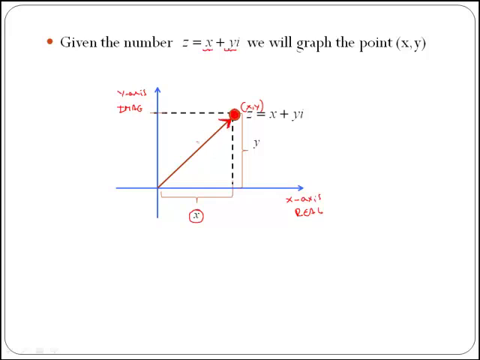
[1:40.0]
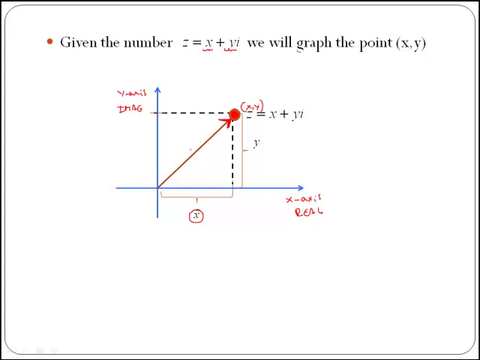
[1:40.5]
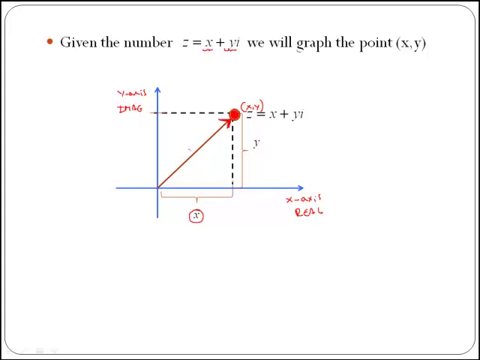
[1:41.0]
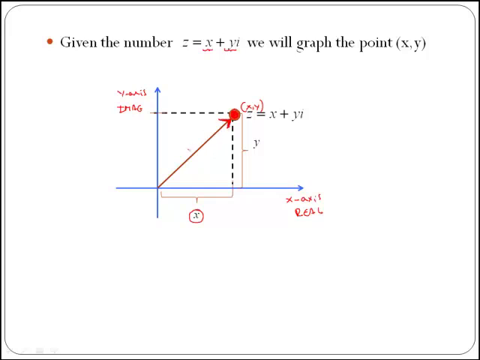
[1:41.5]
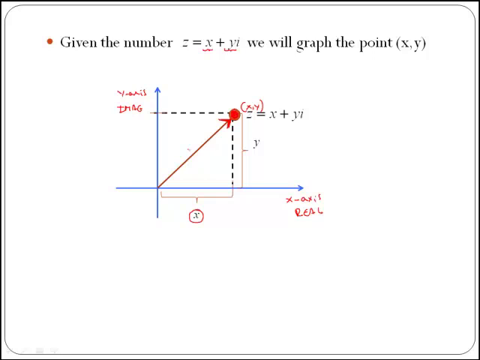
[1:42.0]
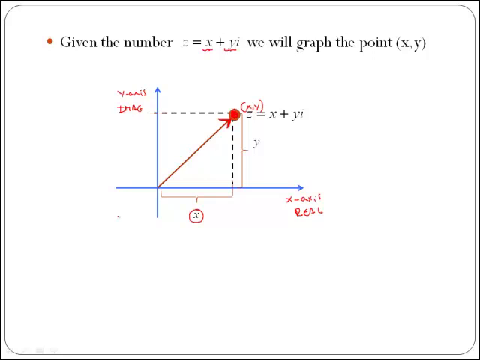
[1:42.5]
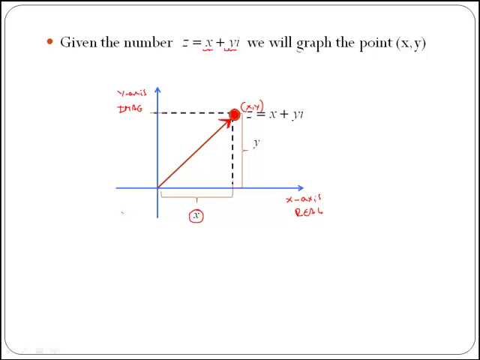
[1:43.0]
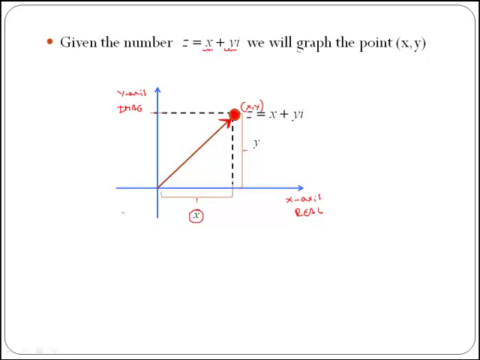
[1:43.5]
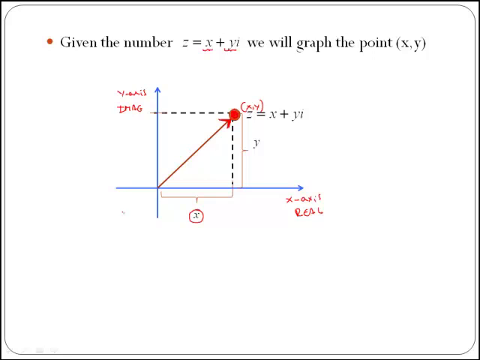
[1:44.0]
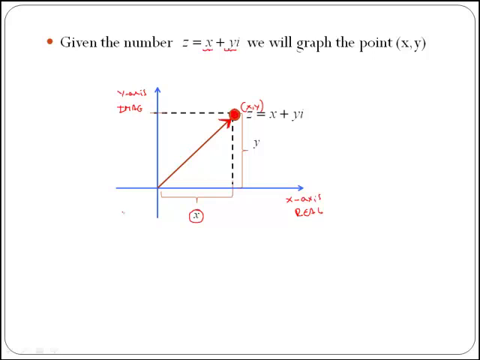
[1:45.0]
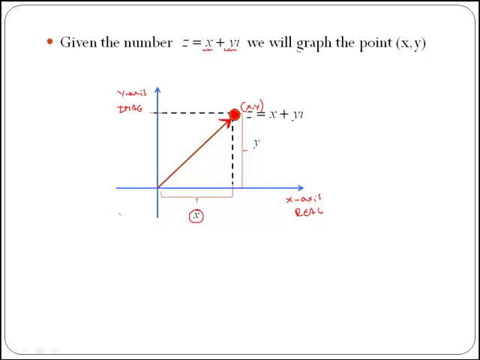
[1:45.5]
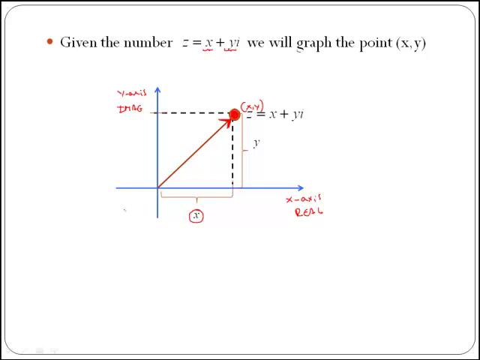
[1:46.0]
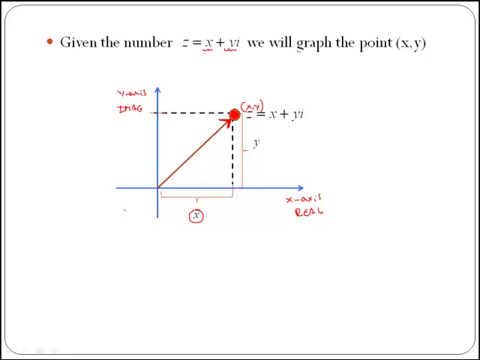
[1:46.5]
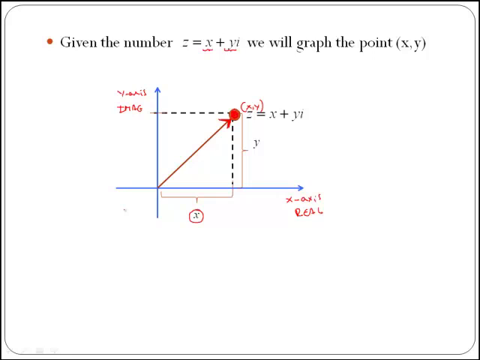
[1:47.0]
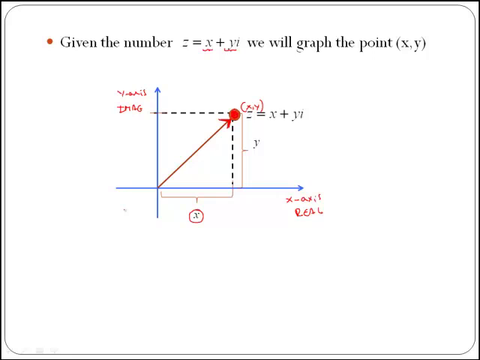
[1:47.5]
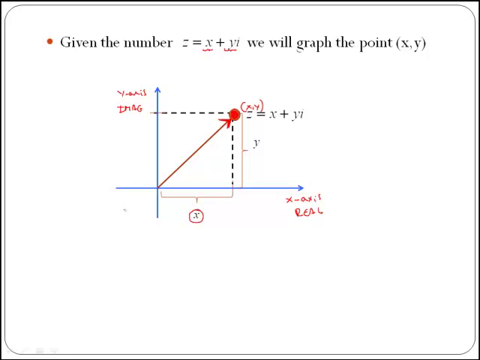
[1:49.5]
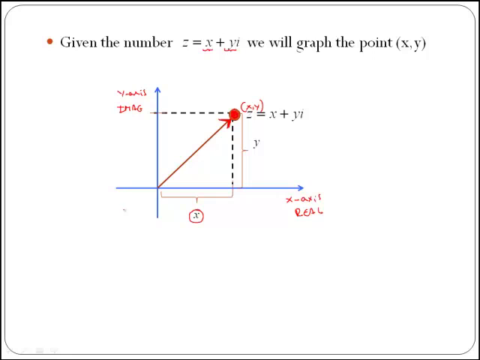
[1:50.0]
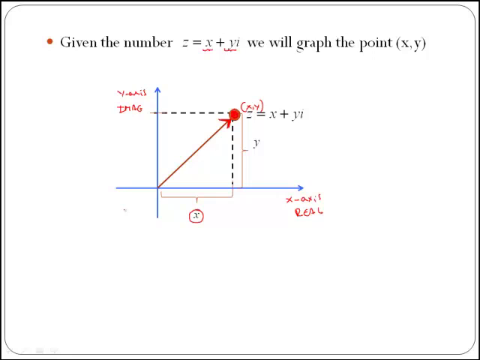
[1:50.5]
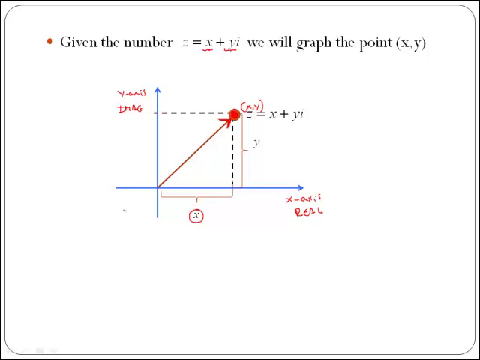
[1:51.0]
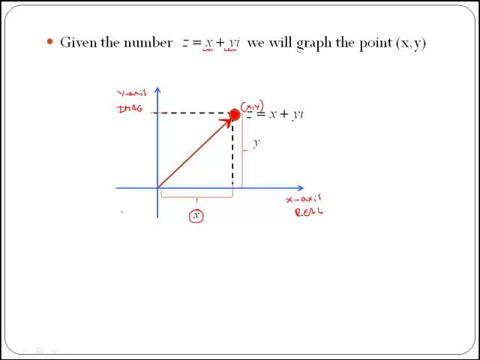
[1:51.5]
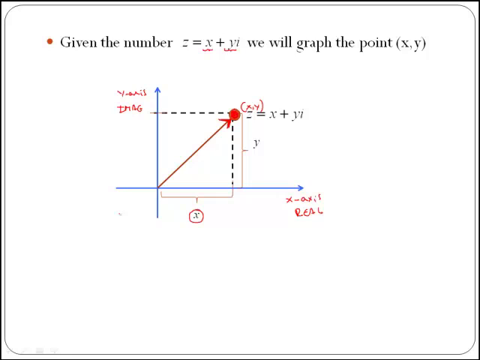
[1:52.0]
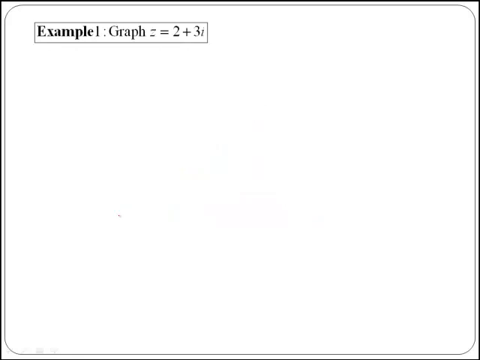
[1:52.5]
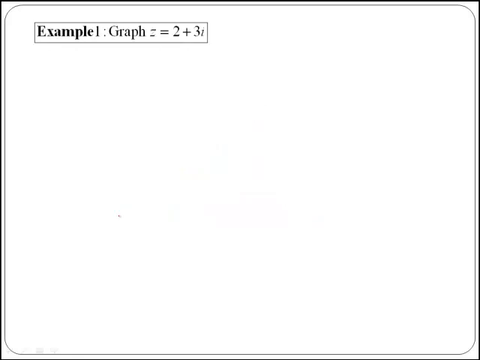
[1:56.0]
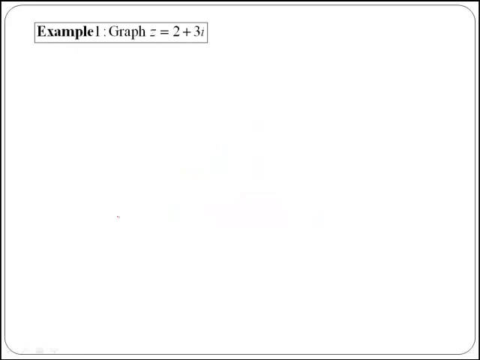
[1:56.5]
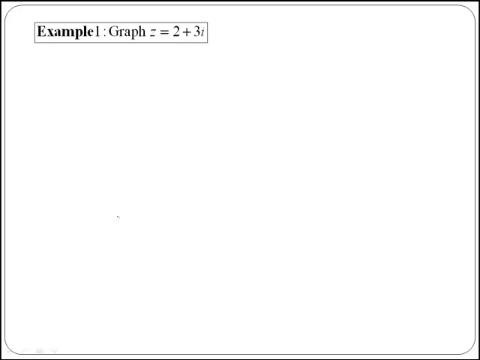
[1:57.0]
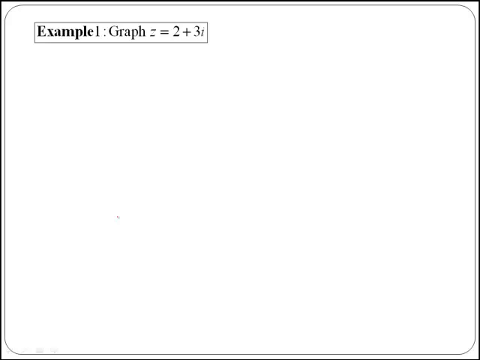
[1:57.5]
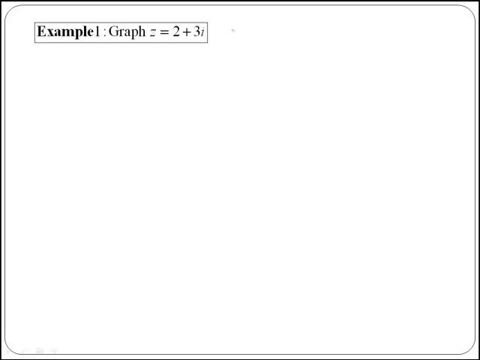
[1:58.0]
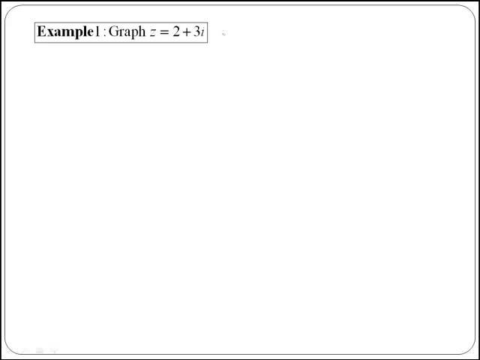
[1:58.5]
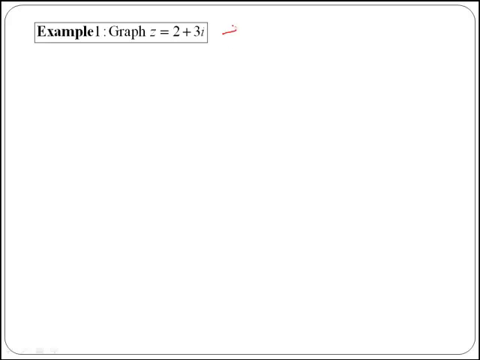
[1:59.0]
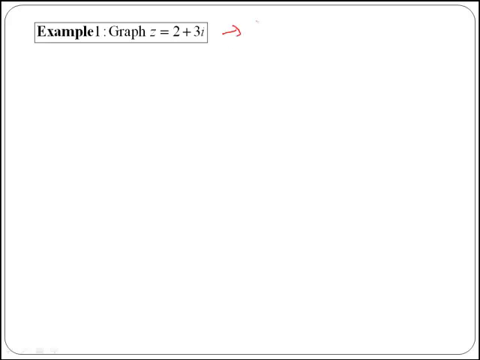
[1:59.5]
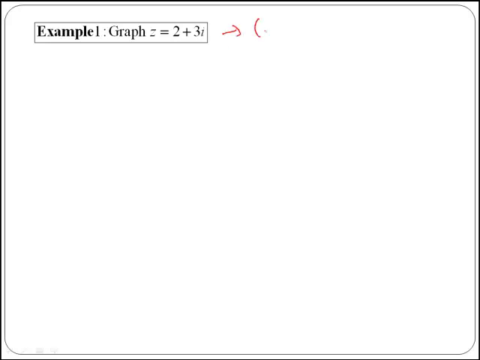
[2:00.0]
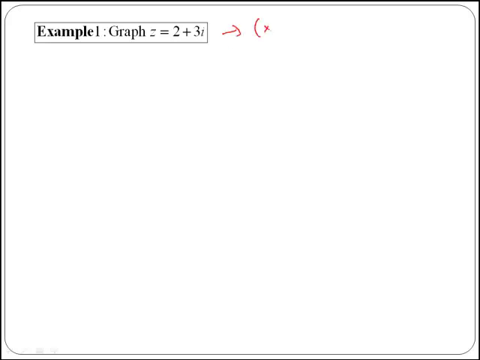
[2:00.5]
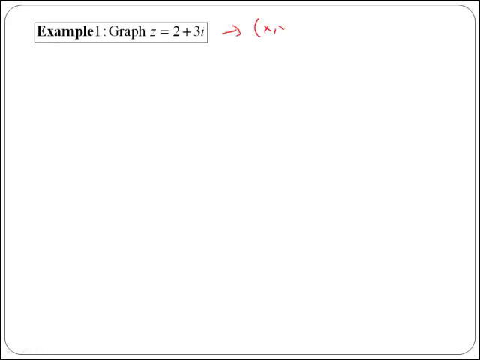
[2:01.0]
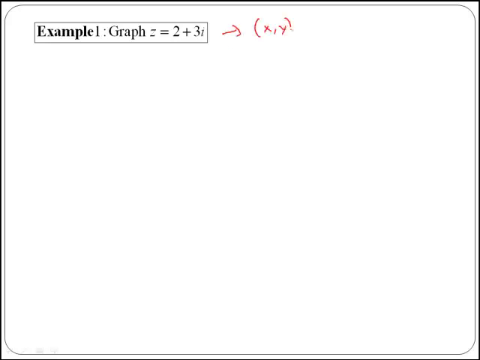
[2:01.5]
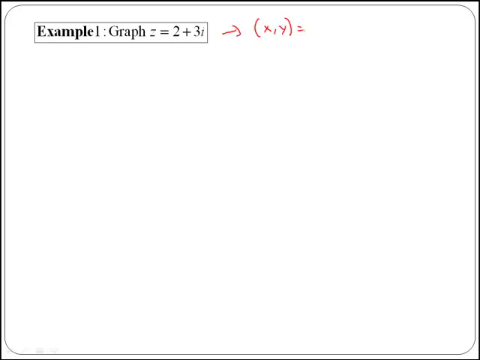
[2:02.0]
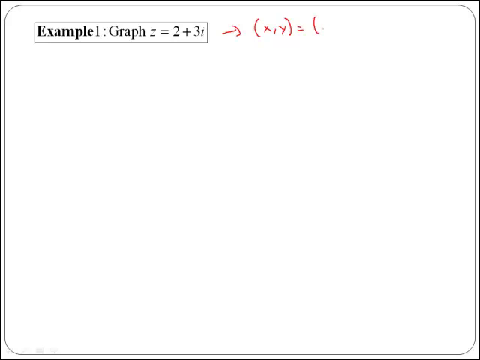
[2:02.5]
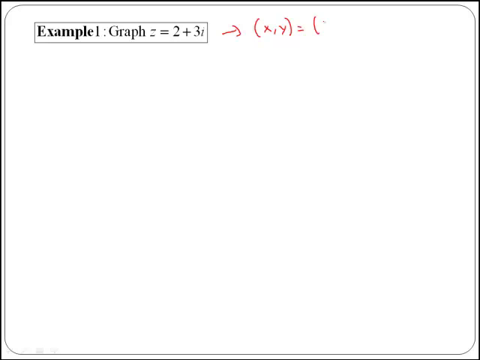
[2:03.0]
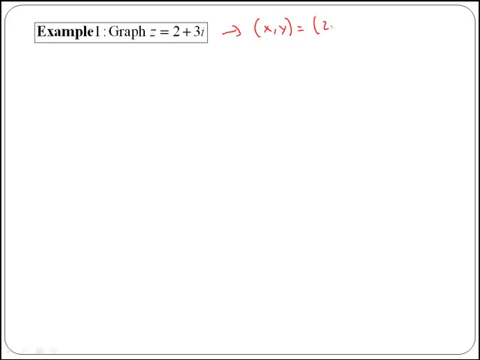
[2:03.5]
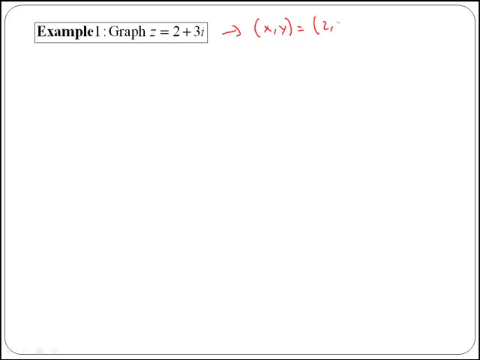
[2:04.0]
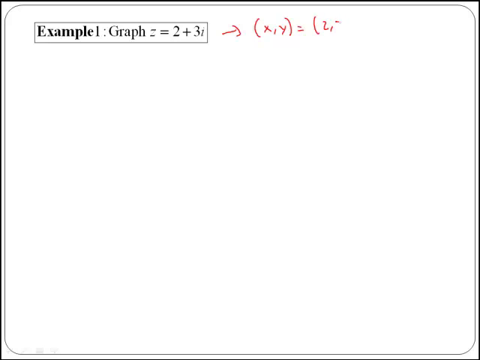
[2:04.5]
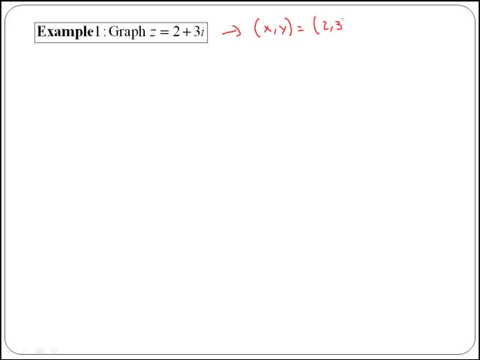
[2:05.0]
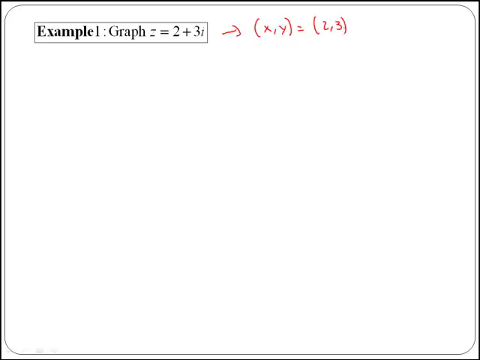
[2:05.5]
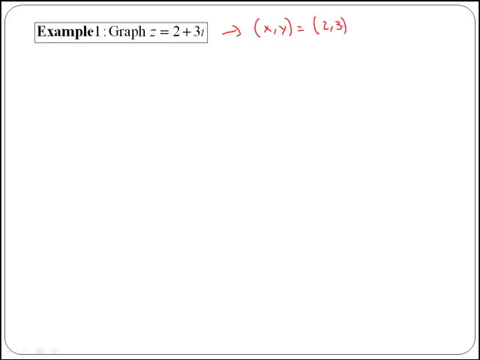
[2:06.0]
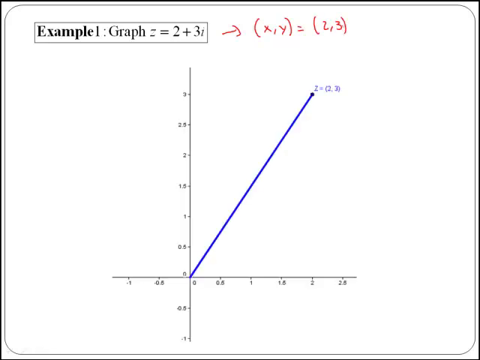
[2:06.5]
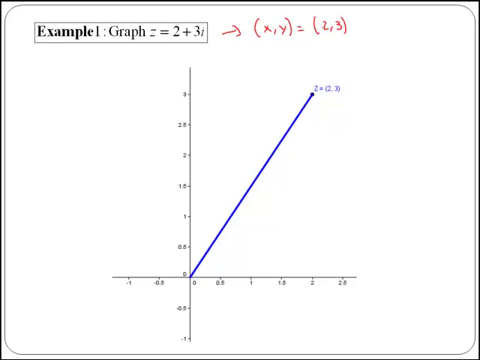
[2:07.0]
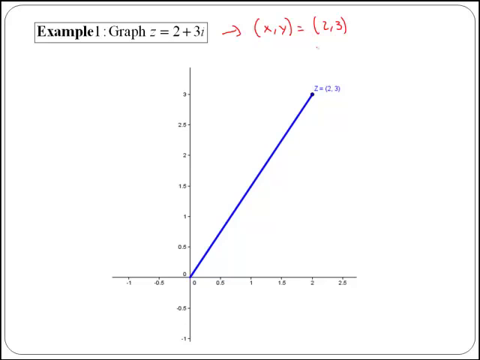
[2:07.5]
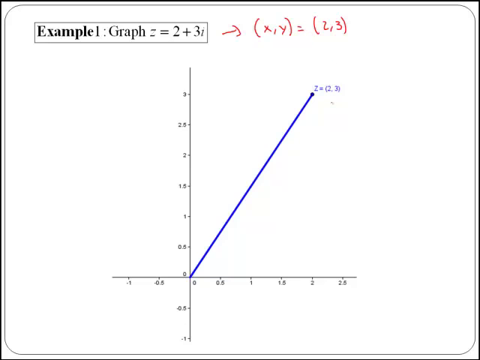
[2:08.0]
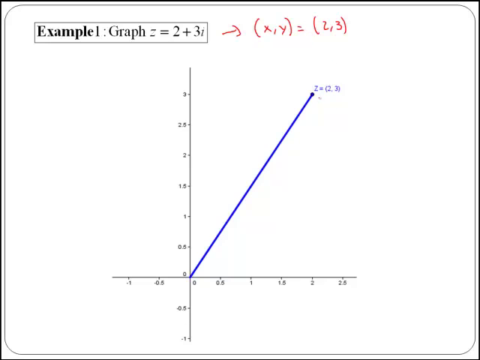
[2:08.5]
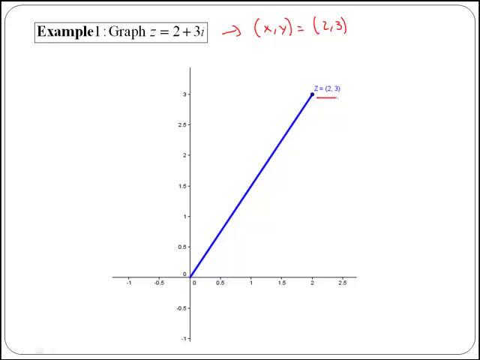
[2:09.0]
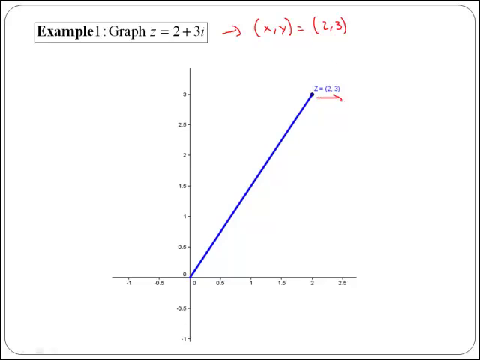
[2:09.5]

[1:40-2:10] The white slide with a gray border shows the red bullet point "given the number z = x + yi," with red squiggly lines under the x and the y, and "we'll graph the point (x, y)." Blue arrows, one vertical and one horizontal, meet at the center. The vertical one is y and the horizontal one is x, each with red writing that cannot be read. A line runs from the center out to about halfway, an x is placed there, and the x is circled in red. Black lines come up from x and sideways from y until they meet at a red dot, and a red line goes from the center up to the red dot. "xy" is written along with "x + y" and the formula again. The screen stays like this for a while. A different screen then appears, again white with a gray border, with a gray outline box reading "Example" and a large bold black "1," followed by "graph z = 2 + 3i." The presenter writes sloppily in red: an arrow pointing from the end of the box and "(x, y) = (2, 3)." A black graph then appears with a horizontal and a vertical line marked with numbers. Zero is where the lines meet; going up, the numbers appear to start at 0.5 and go up to 3, and going down they become negative. On the horizontal line, going left is negative and going right is positive, up to 2. A blue line starts at zero and goes up to 3 on the vertical and 2 on the horizontal.